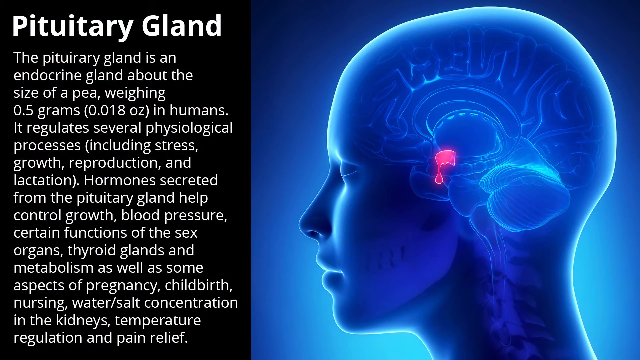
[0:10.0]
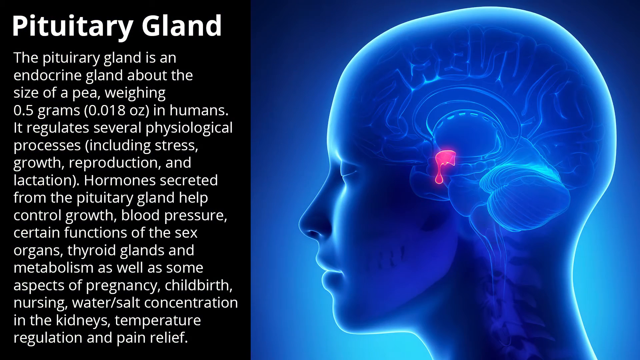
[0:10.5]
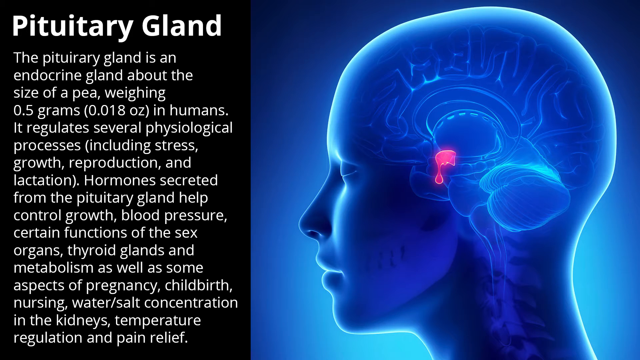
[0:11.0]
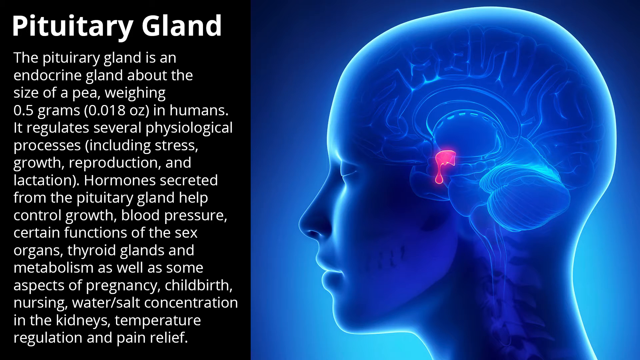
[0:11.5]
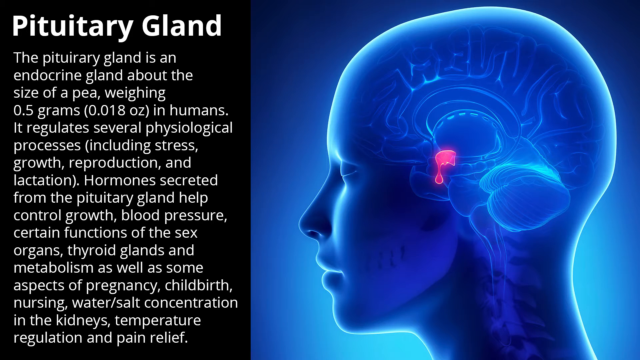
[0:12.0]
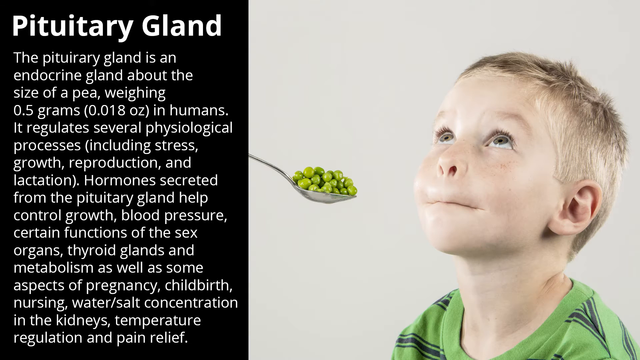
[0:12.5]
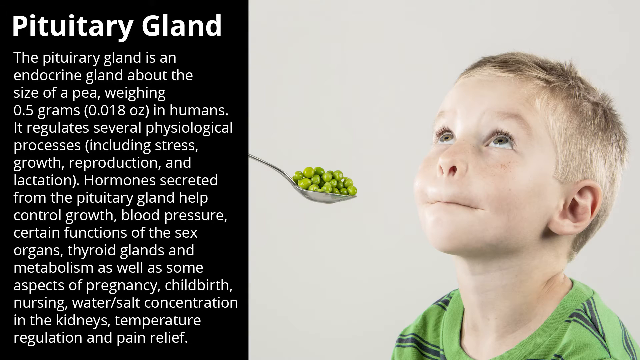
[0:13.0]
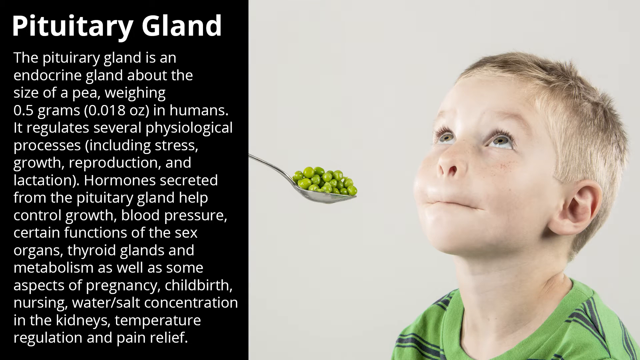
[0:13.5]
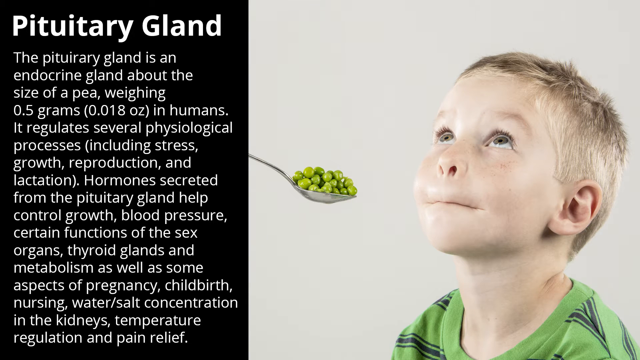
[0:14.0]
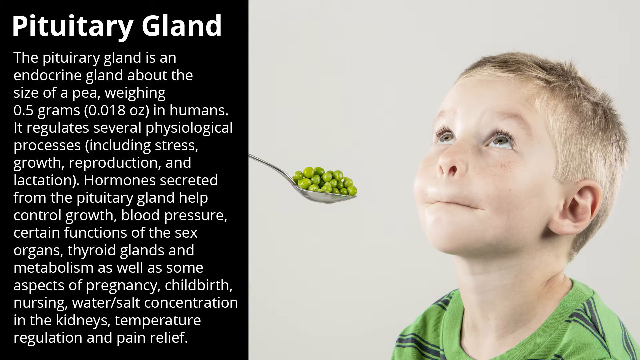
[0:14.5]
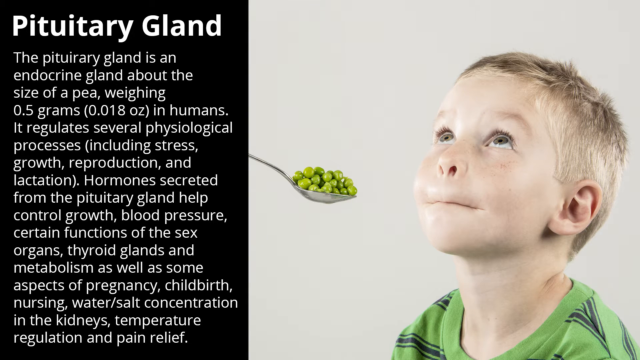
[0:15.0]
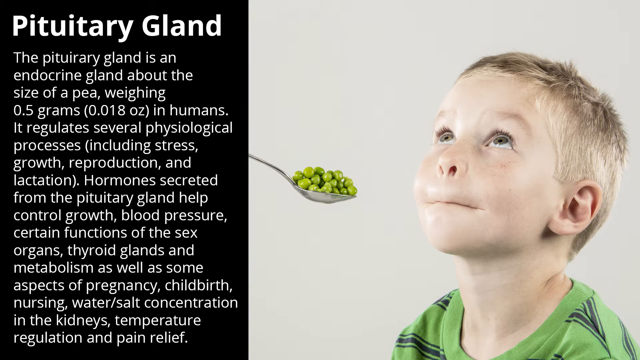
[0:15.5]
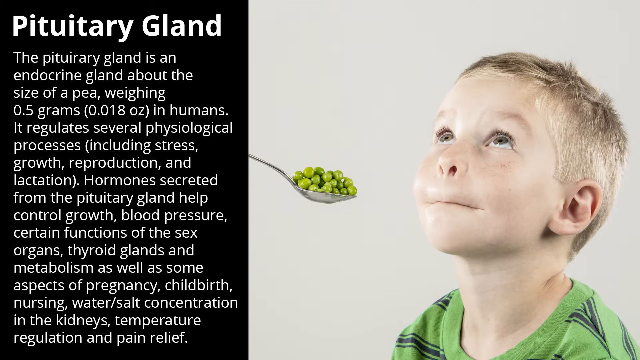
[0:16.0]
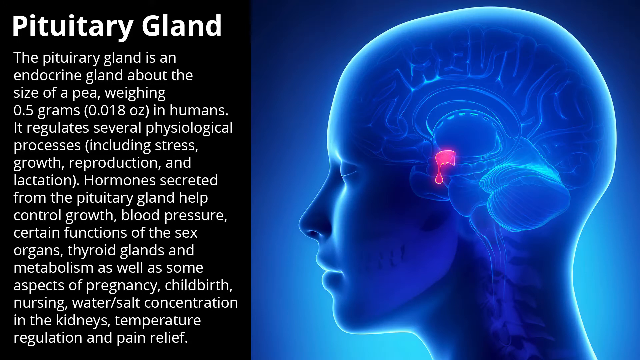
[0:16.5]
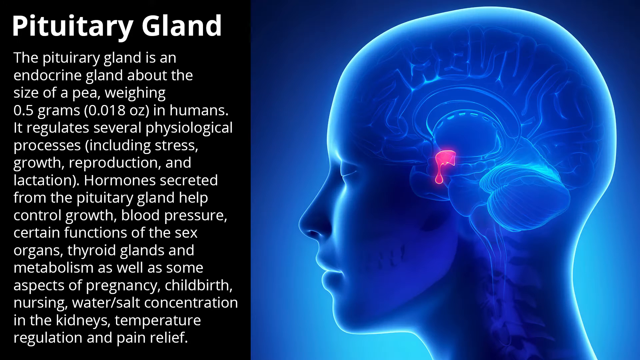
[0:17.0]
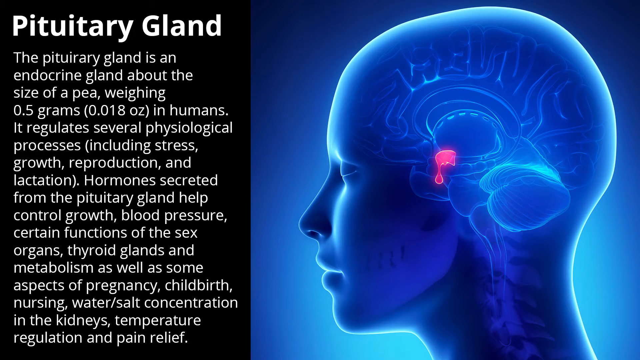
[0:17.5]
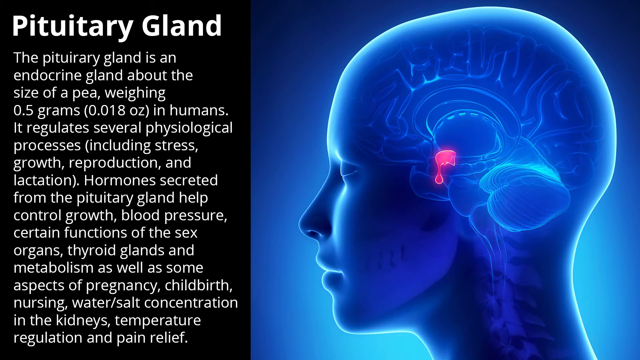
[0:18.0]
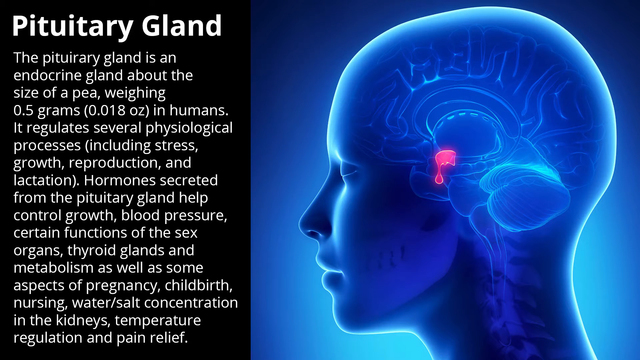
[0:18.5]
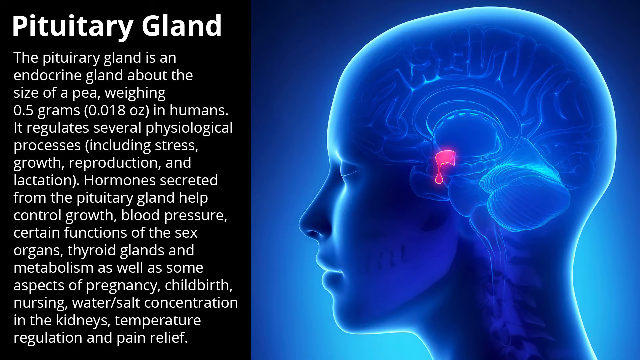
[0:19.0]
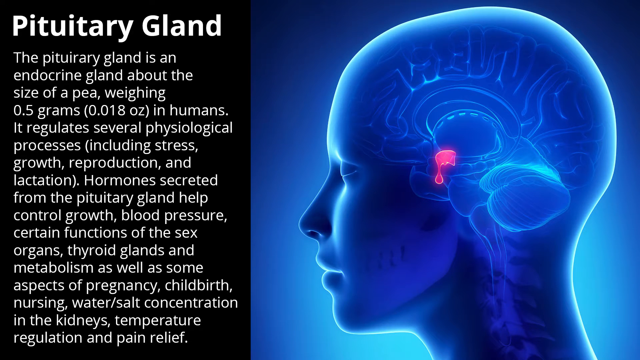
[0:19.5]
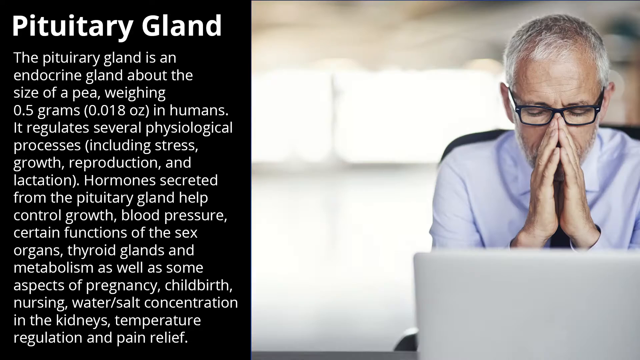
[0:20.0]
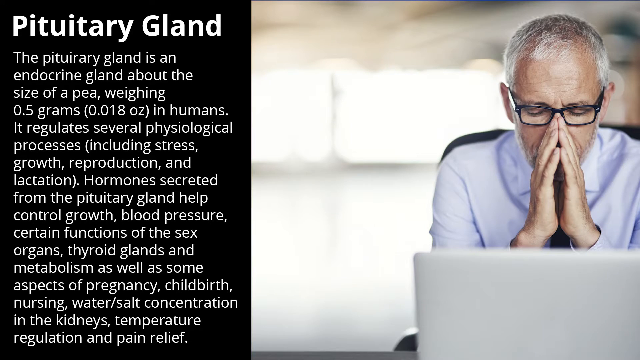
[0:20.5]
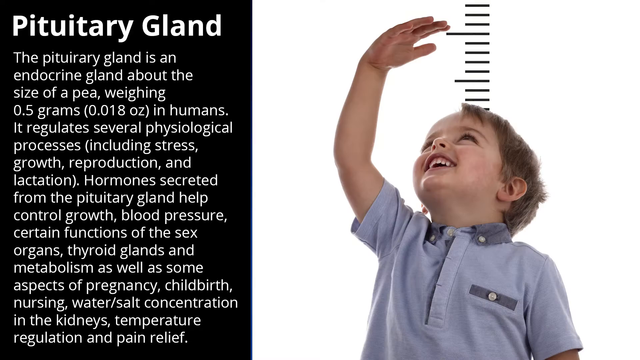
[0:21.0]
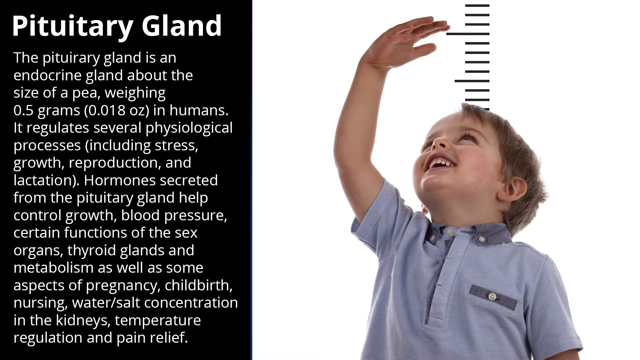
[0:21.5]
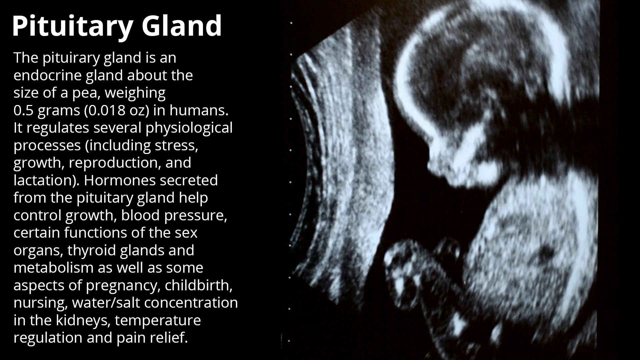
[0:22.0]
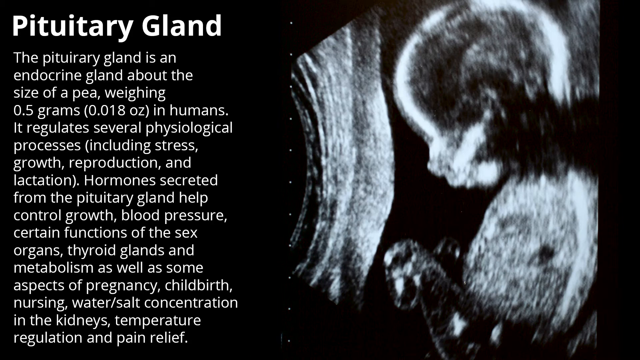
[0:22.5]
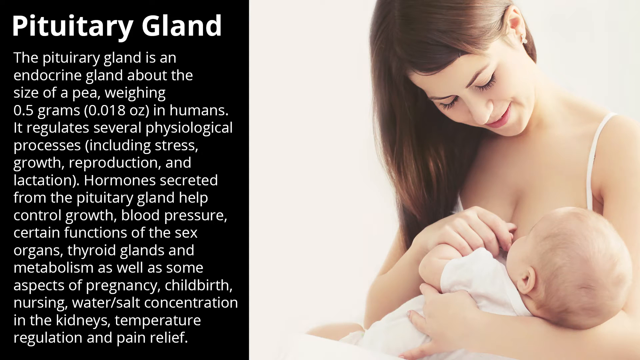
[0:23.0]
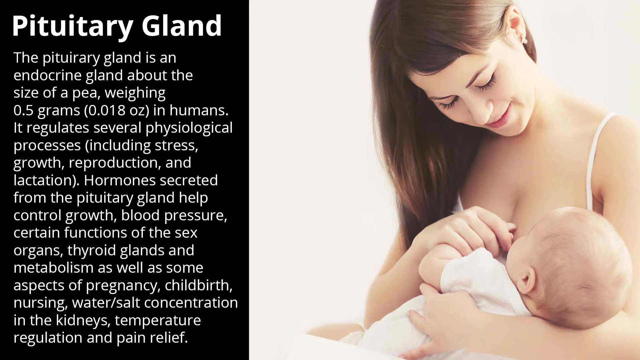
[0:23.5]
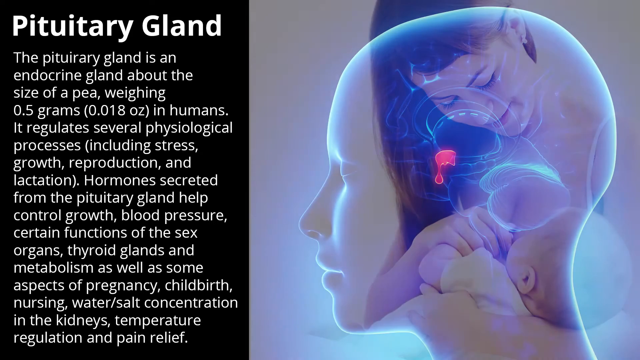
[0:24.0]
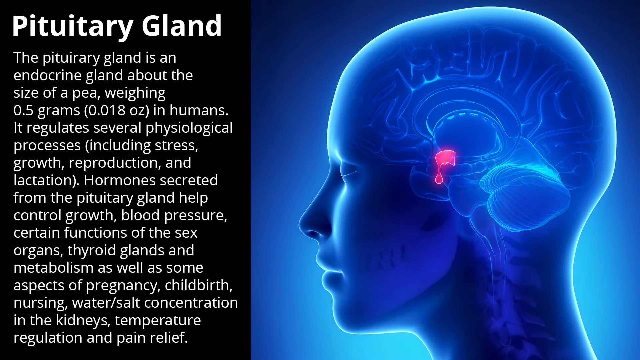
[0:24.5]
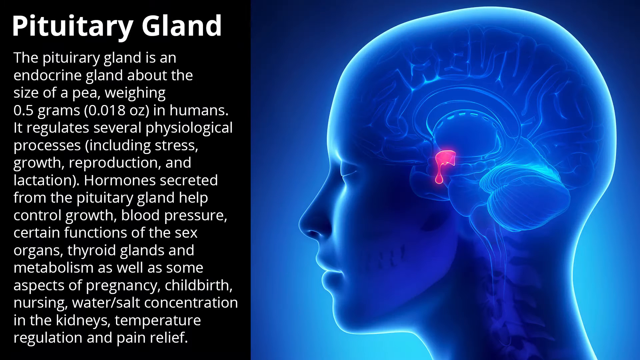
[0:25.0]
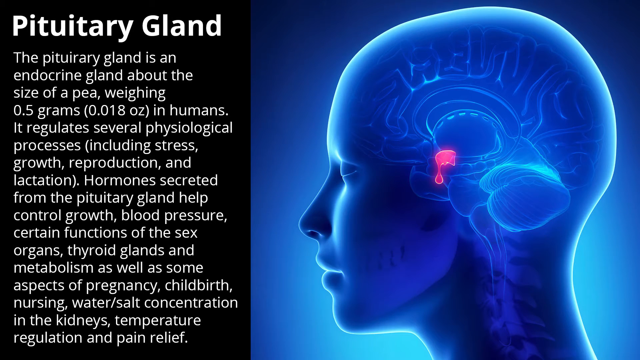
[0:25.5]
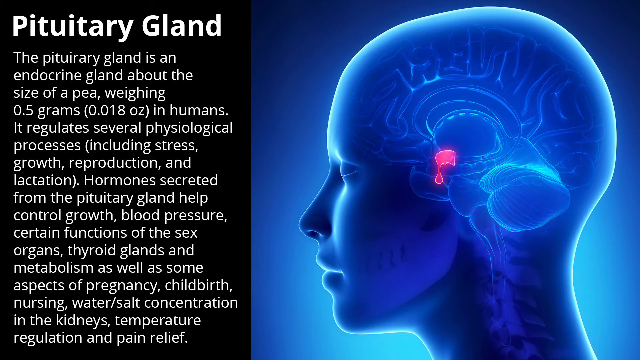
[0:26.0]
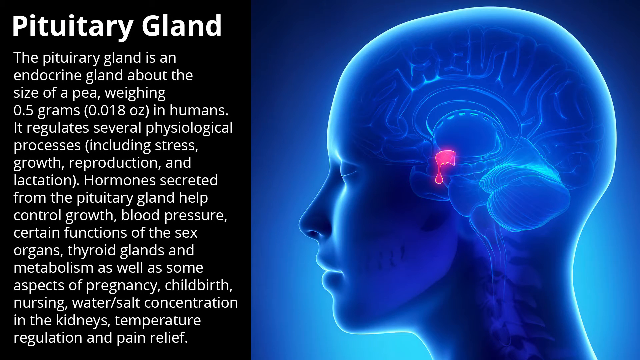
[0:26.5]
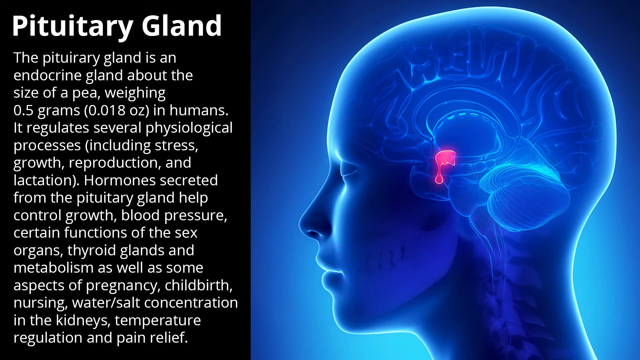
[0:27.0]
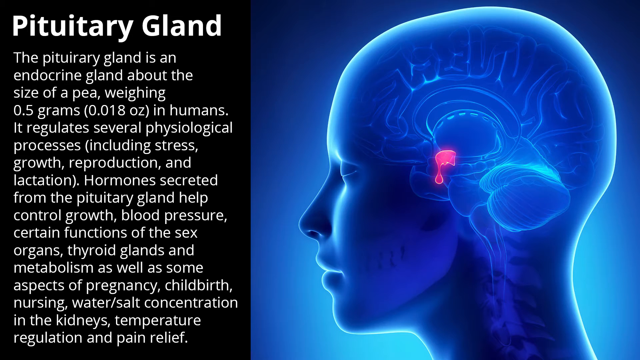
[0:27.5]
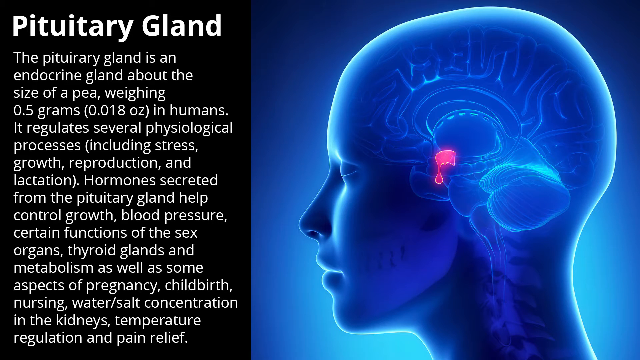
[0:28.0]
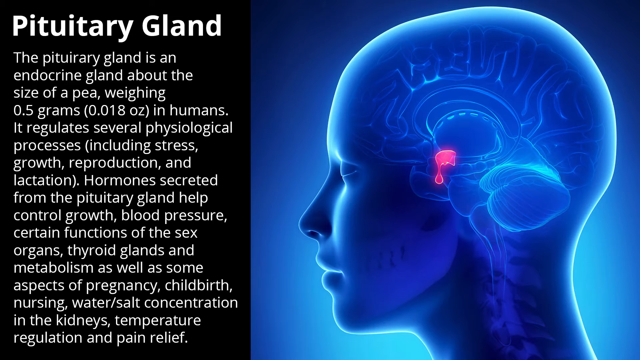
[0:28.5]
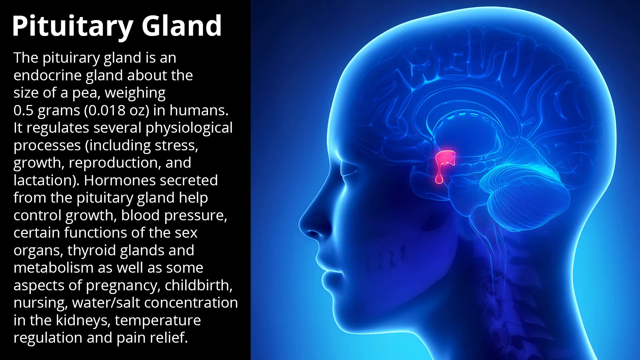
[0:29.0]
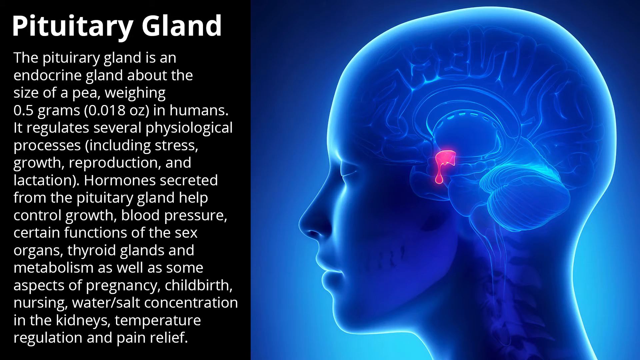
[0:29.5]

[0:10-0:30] The slide has the text "pituitary gland" on the left, and it flicks to an image on the right of a child holding his lips inside his mouth, over his teeth, as if refusing to let something in. He looks up at what is likely a parent or caregiver holding a spoon with many peas on it; the child is refusing to eat vegetables. The slide flickers back to the original image, then changes to a man wearing black-rimmed glasses with his hands on his face and a laptop in front of him. He appears to be in an office space and looks distressed. The accompanying text says it regulates several physiological processes including stress. Next comes an image of a child with what looks like a ruler, a set of lines above his head, holding his right arm up to check how tall he is, followed by a baby, representing growth, reproduction and lactation.